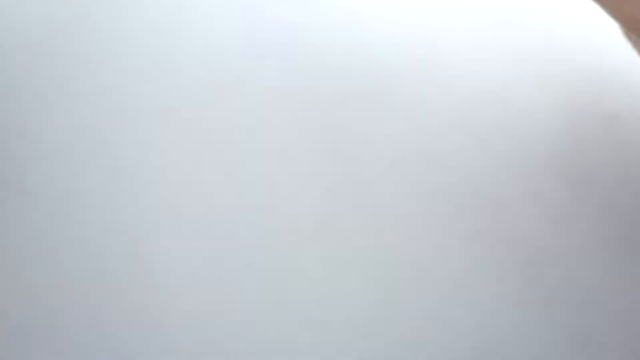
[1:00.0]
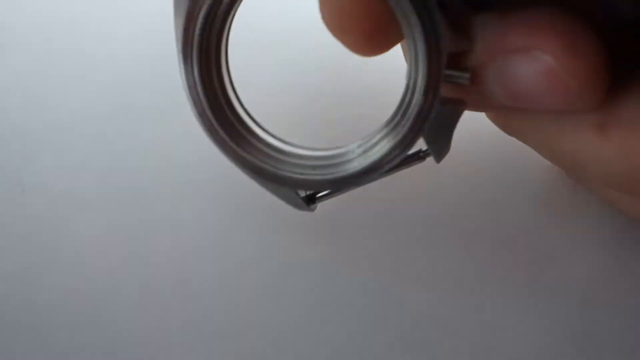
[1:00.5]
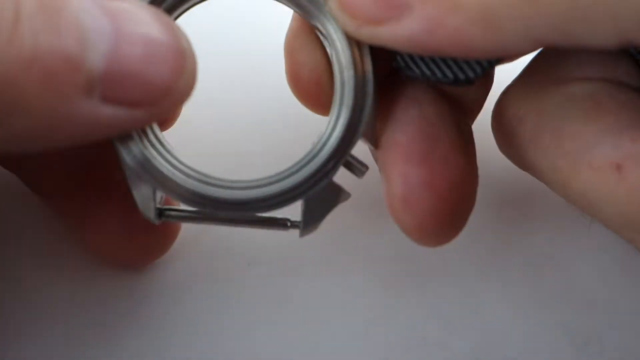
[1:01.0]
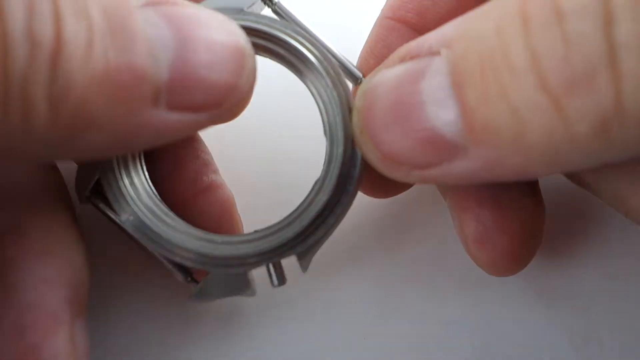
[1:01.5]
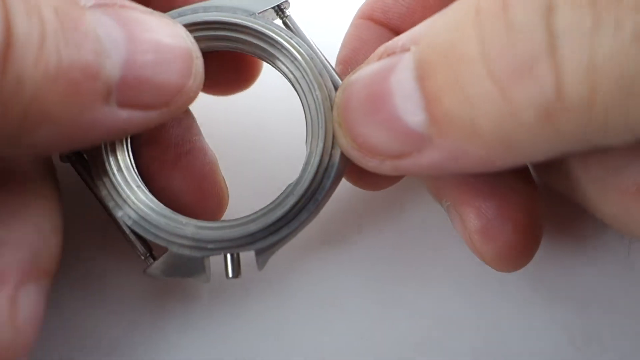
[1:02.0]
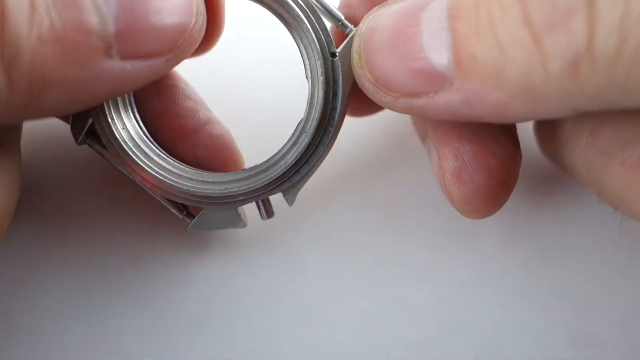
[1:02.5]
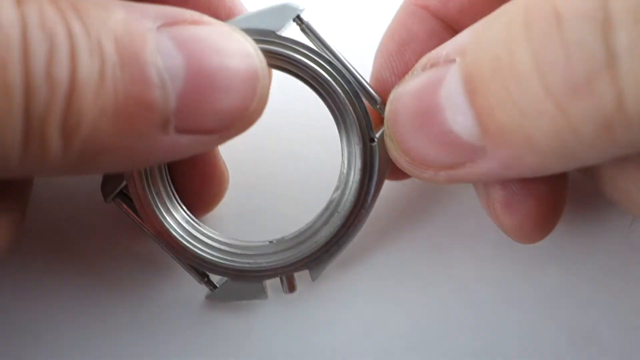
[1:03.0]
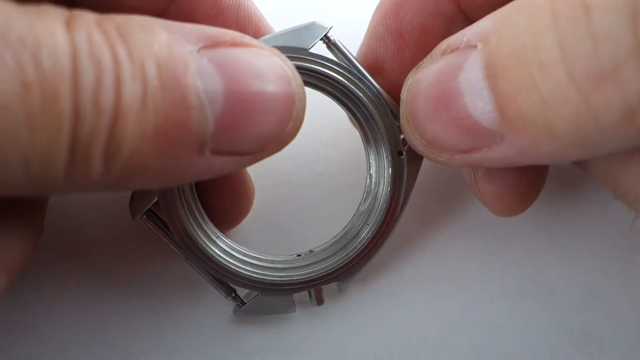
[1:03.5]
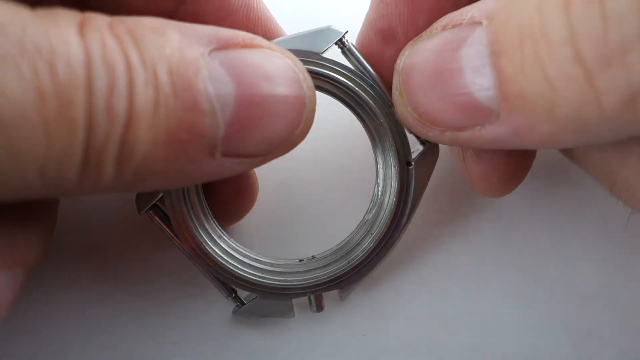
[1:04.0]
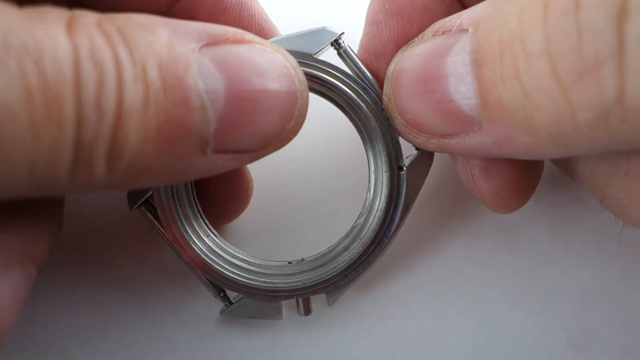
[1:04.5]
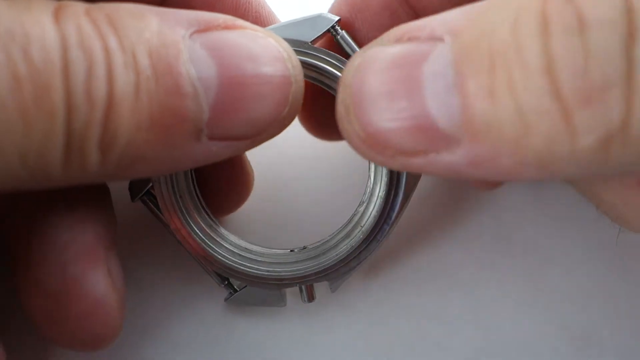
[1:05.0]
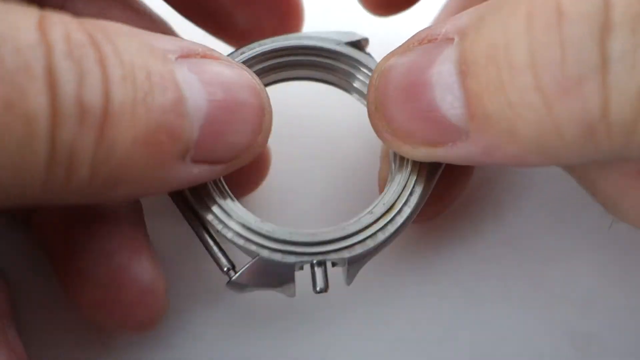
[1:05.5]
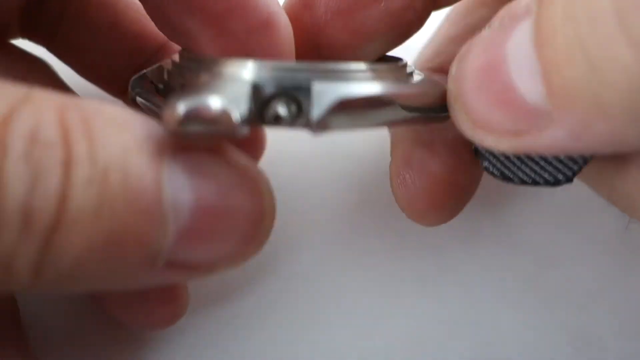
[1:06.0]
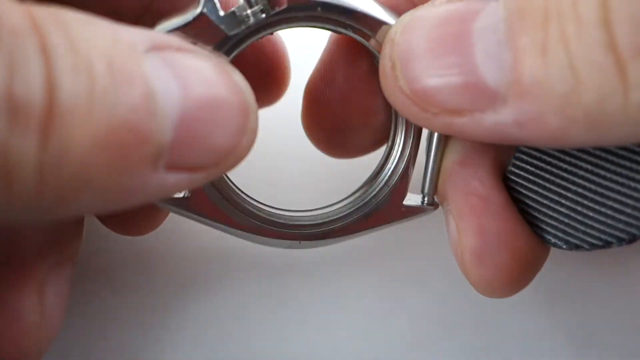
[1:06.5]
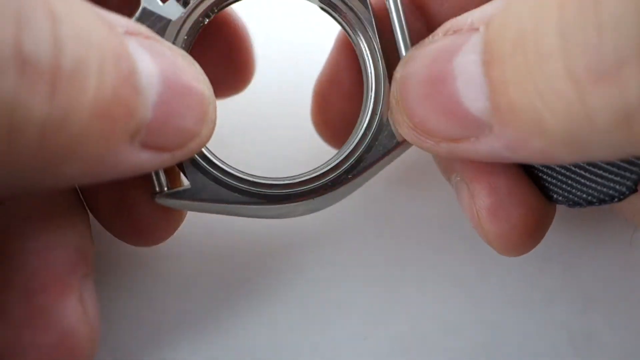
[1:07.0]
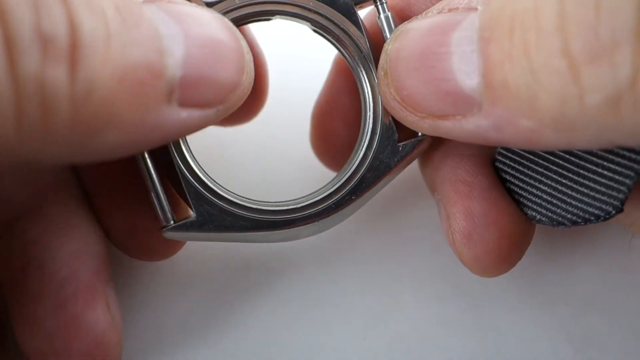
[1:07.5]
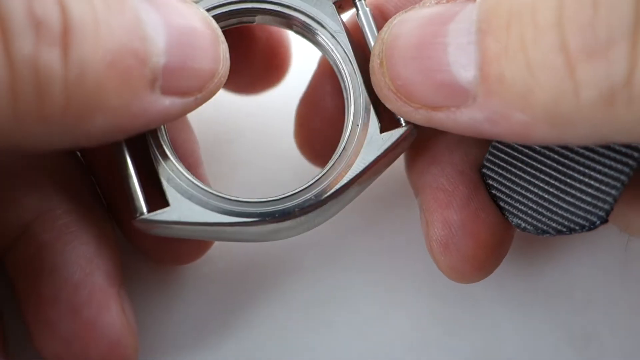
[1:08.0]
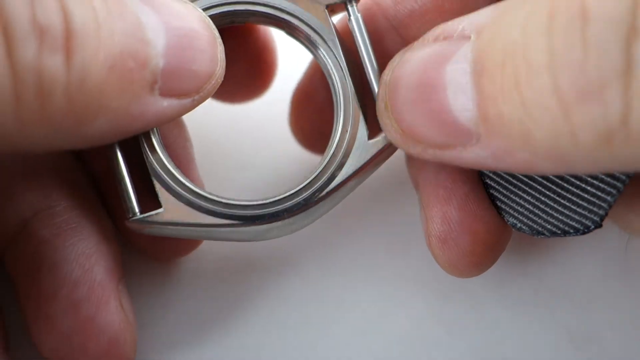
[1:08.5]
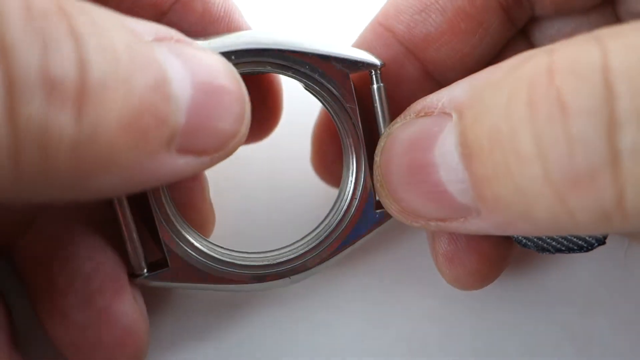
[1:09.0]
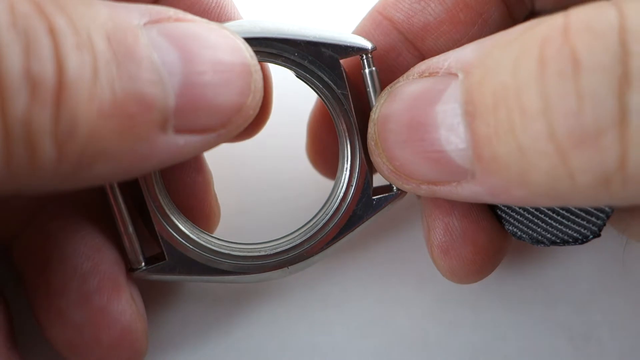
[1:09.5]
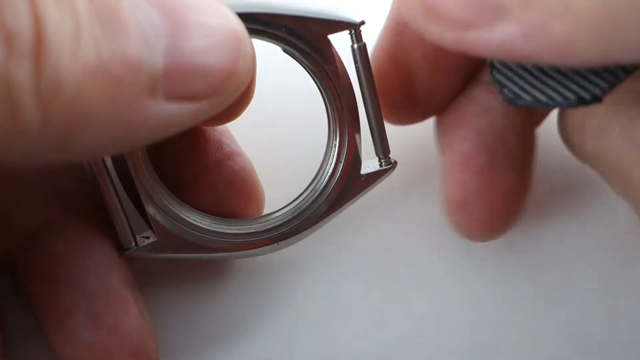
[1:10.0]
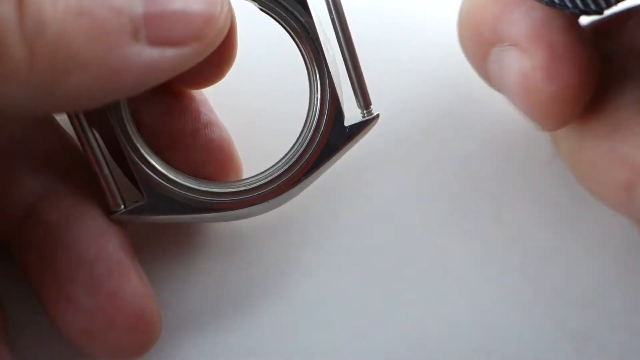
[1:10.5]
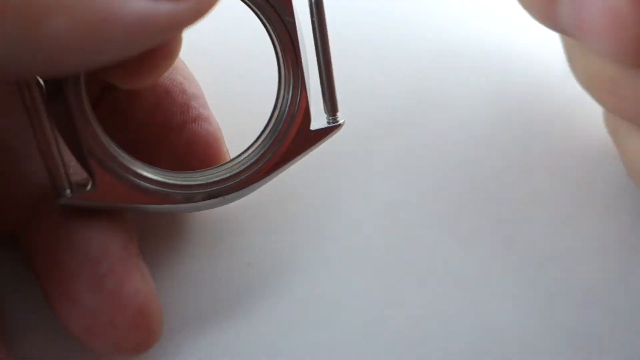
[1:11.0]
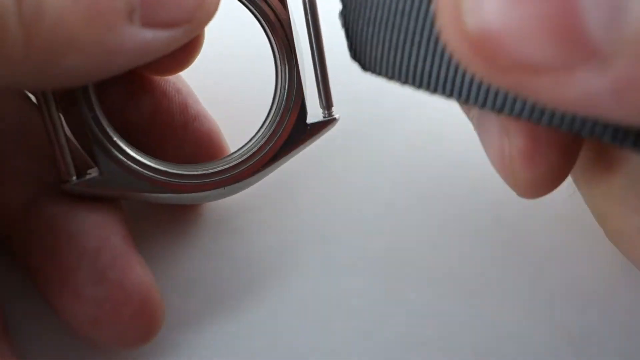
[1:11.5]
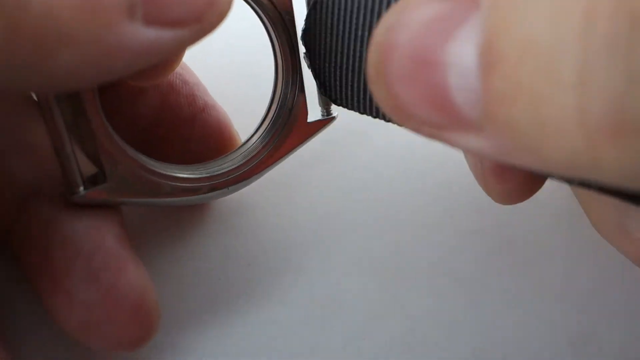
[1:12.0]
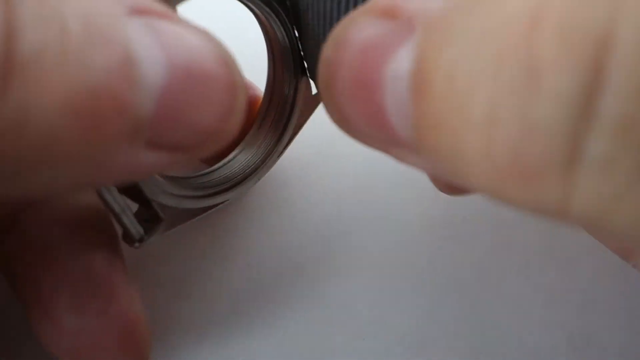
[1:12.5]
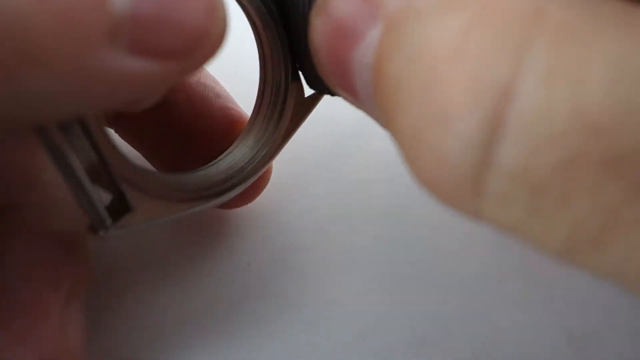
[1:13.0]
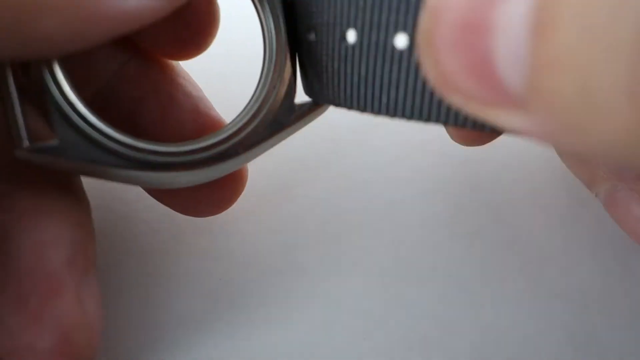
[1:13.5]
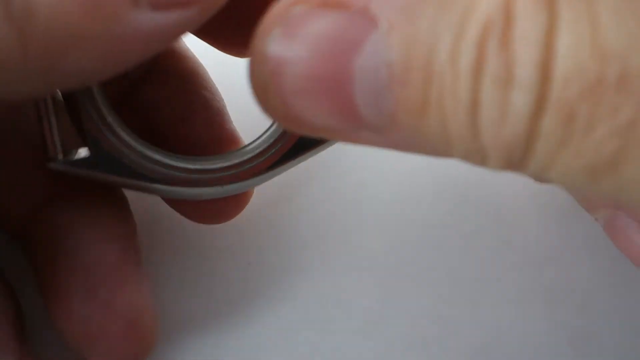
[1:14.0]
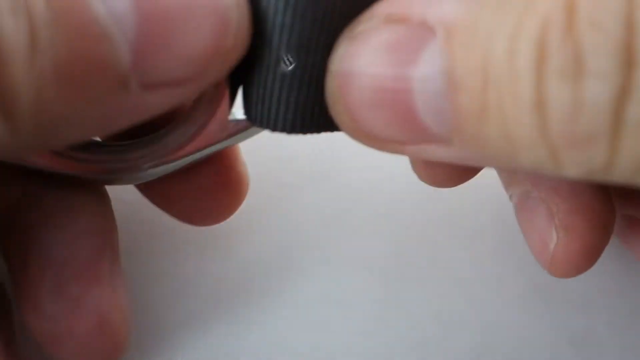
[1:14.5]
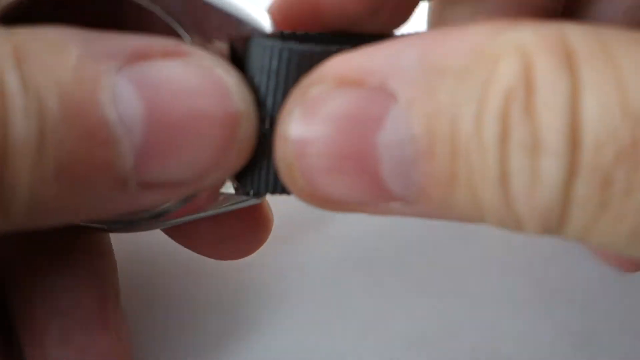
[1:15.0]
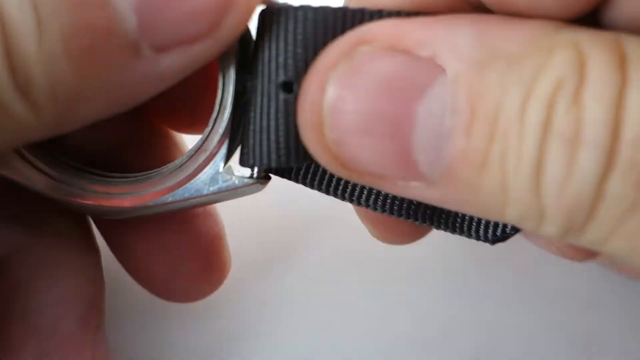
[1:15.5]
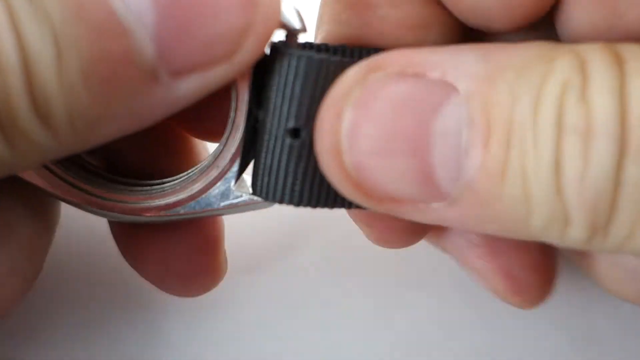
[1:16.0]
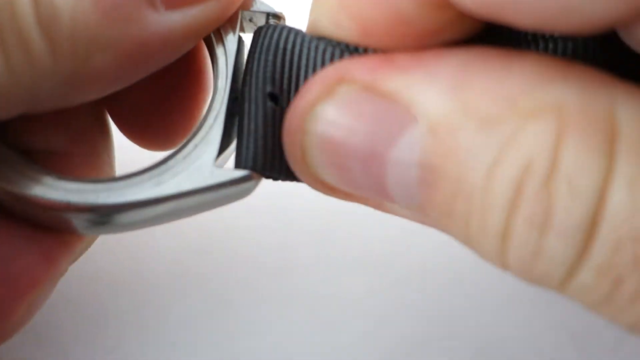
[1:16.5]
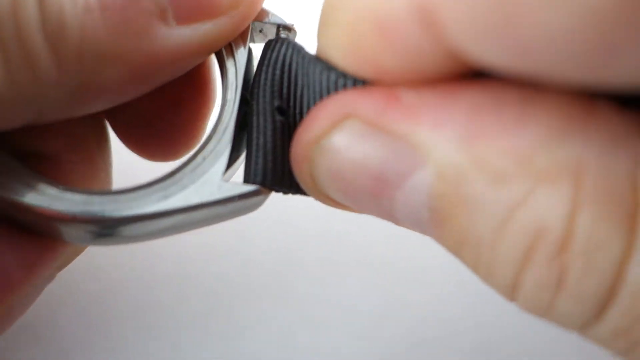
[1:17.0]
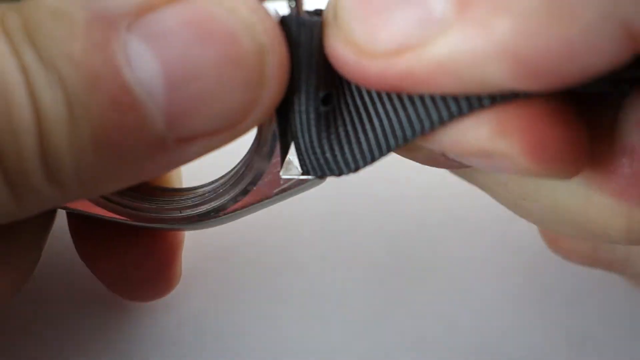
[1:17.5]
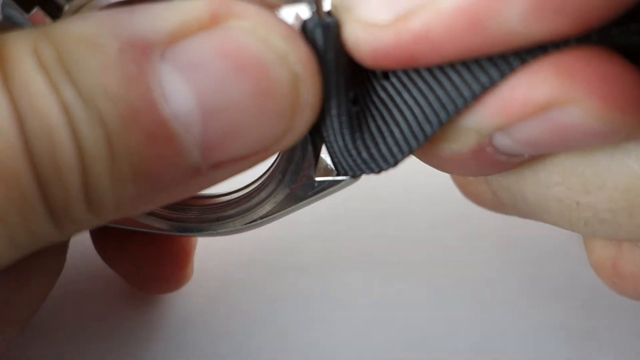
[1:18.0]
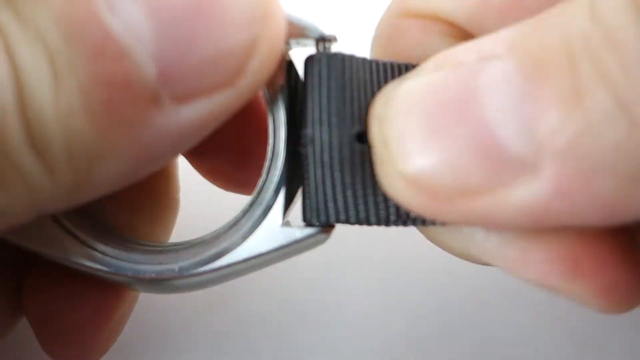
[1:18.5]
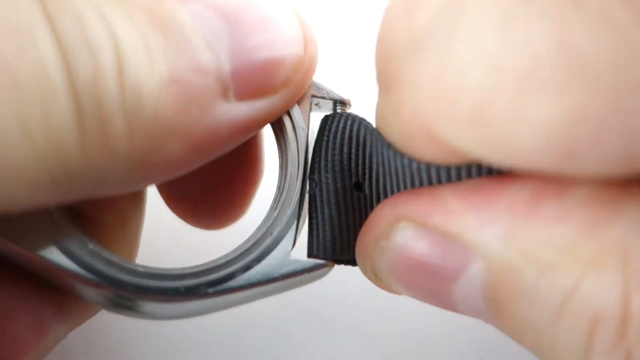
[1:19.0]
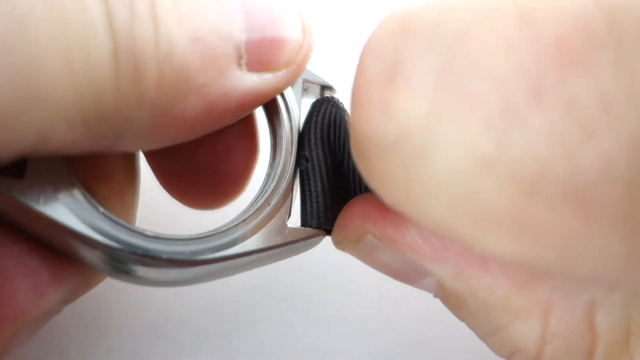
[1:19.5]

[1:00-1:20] A different image appears with a white background. In the top right-hand corner there is a dark grey area like a slice of triangle, which resembles fingers. A hand comes down from that side, and the left hand is also visible. The right hand holds another piece of watch strap, with just its tip visible through the thumb and two fingers. On the left-hand side, a thumb and two fingers hold the watch face, whose centre is clear. They begin to turn the watch face over and thread the watch strap through the other section of the gap on the watch face, linking it all the way through and back out again and clenching it with their right hand.